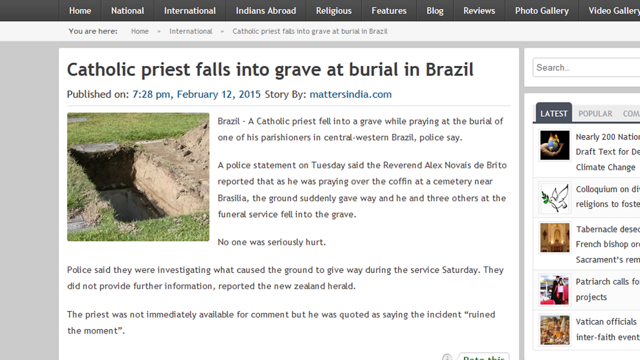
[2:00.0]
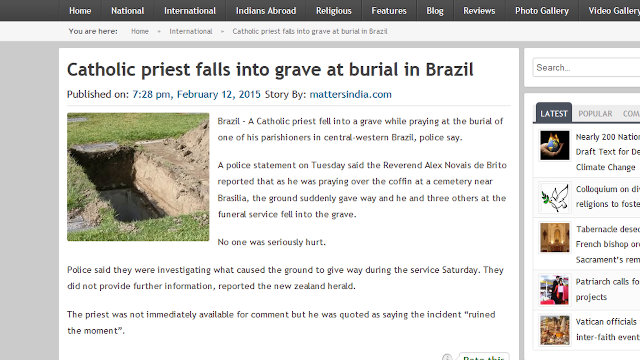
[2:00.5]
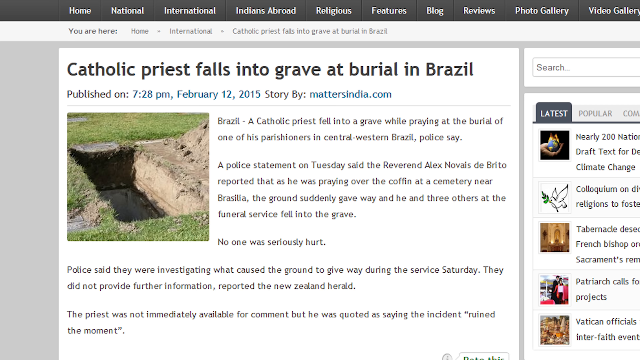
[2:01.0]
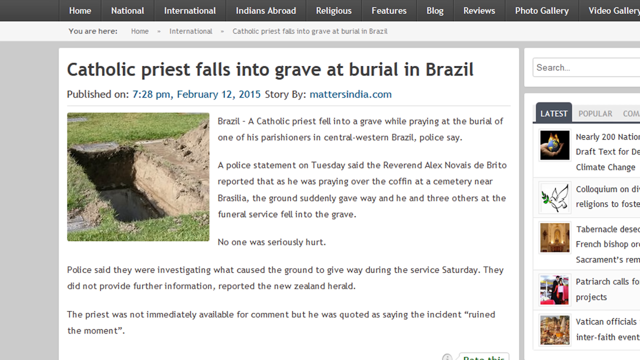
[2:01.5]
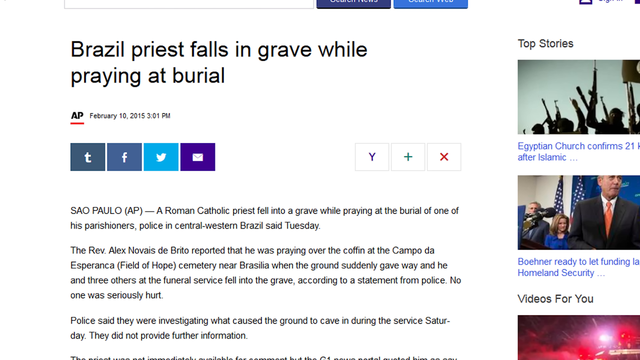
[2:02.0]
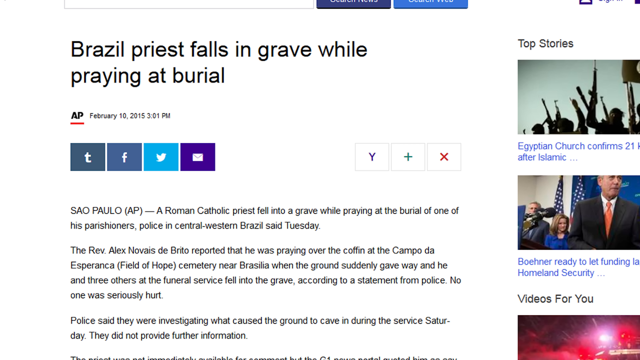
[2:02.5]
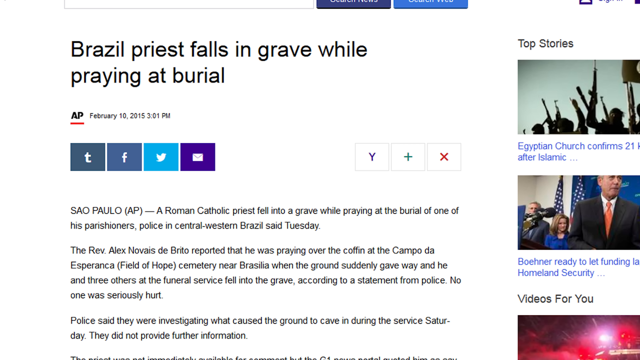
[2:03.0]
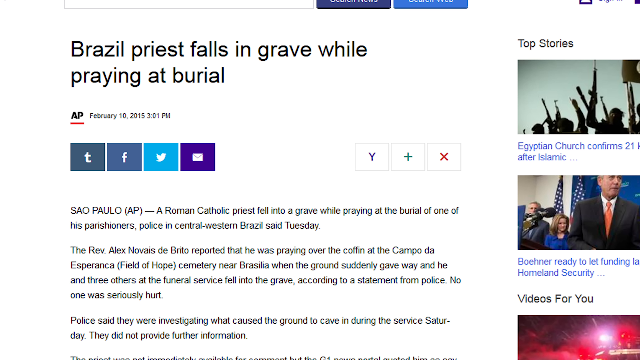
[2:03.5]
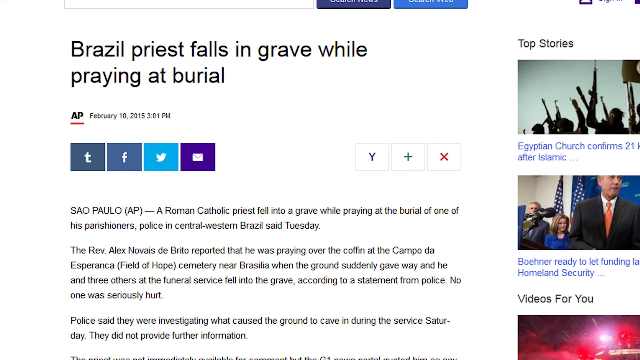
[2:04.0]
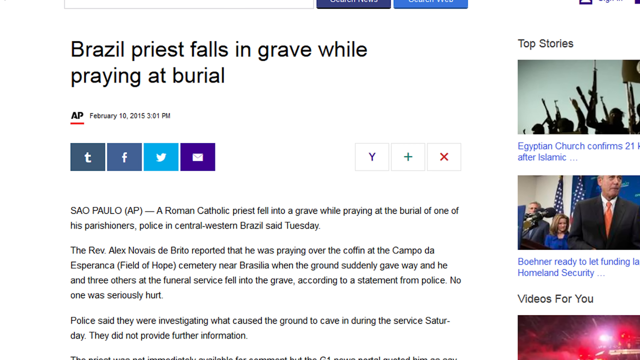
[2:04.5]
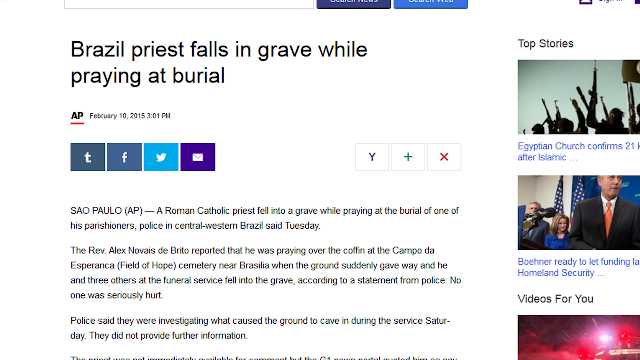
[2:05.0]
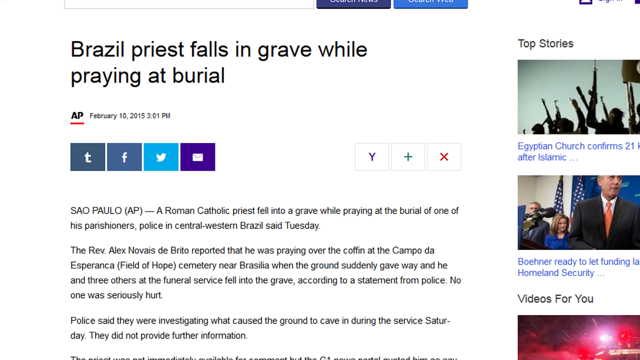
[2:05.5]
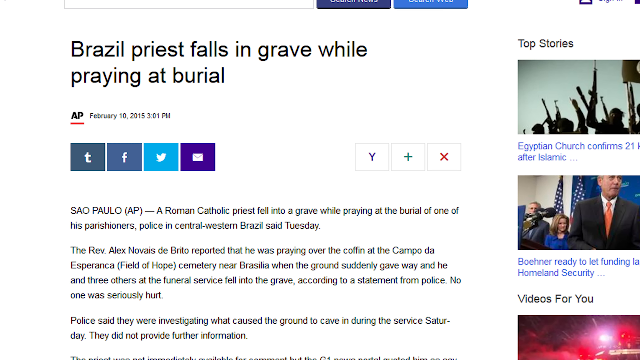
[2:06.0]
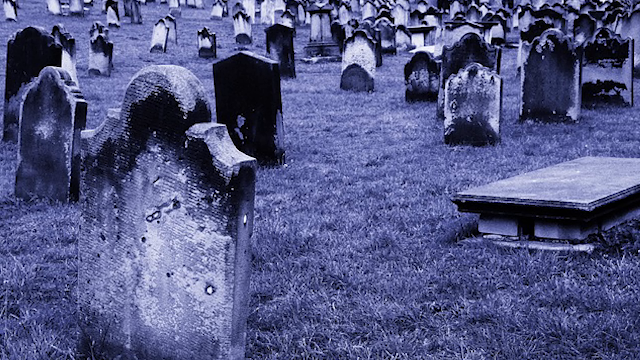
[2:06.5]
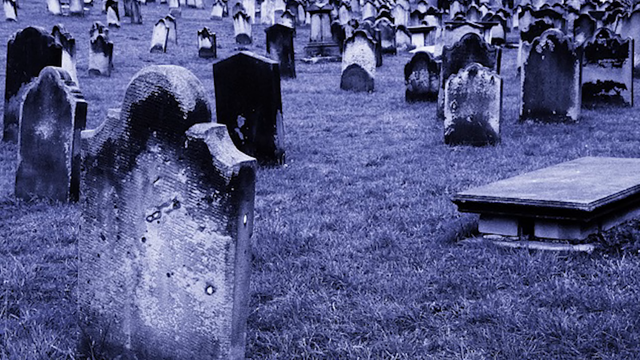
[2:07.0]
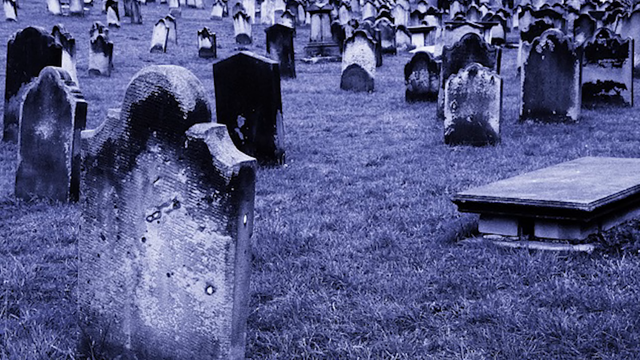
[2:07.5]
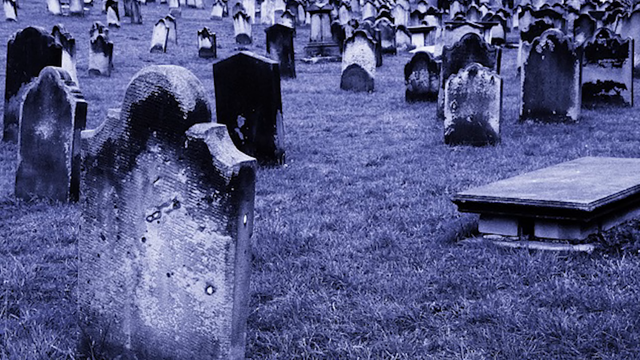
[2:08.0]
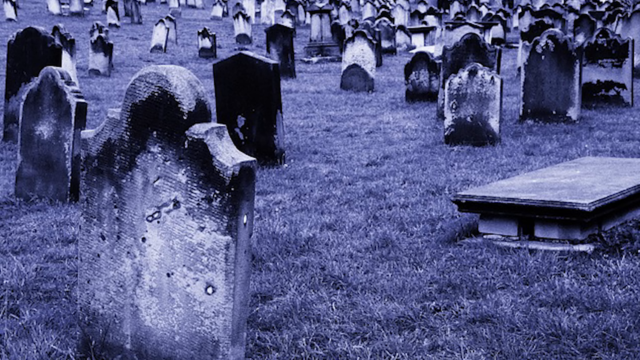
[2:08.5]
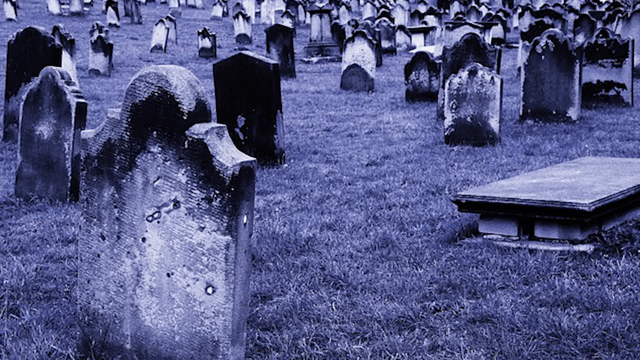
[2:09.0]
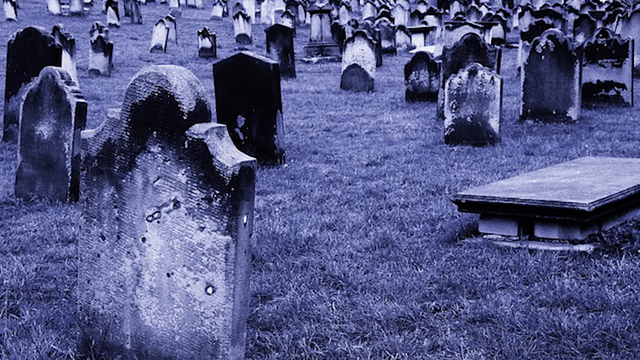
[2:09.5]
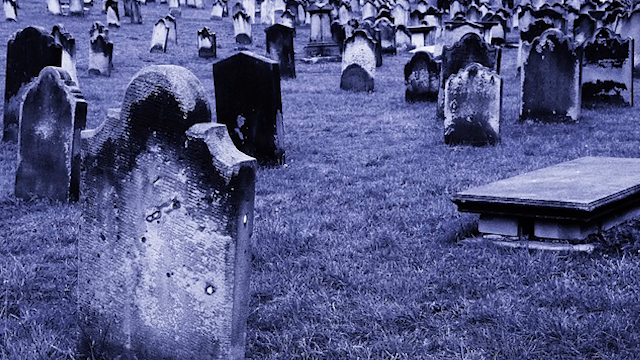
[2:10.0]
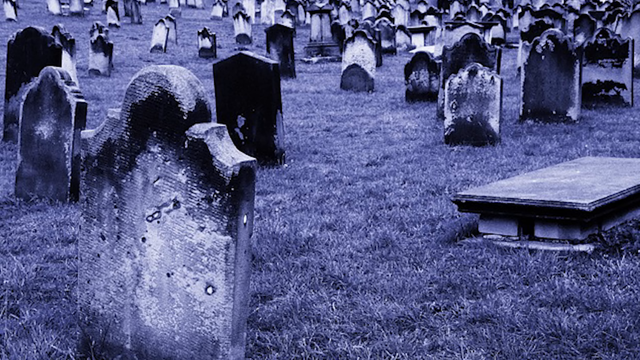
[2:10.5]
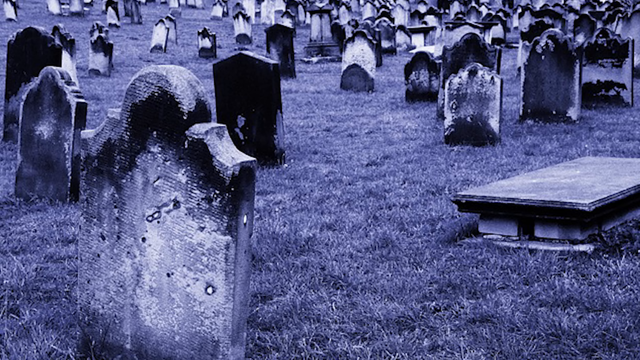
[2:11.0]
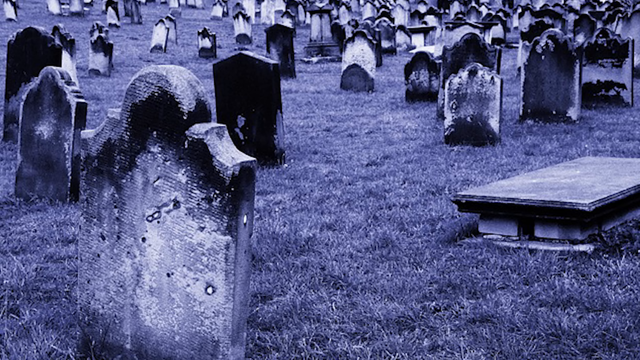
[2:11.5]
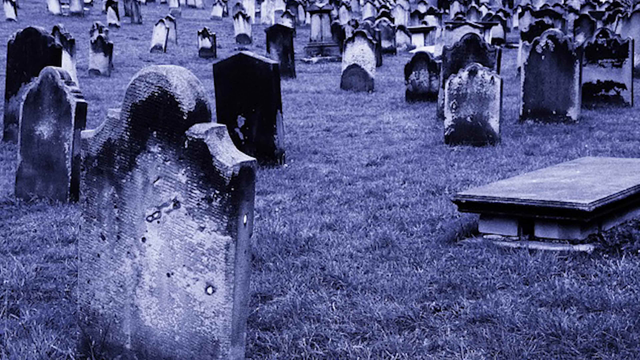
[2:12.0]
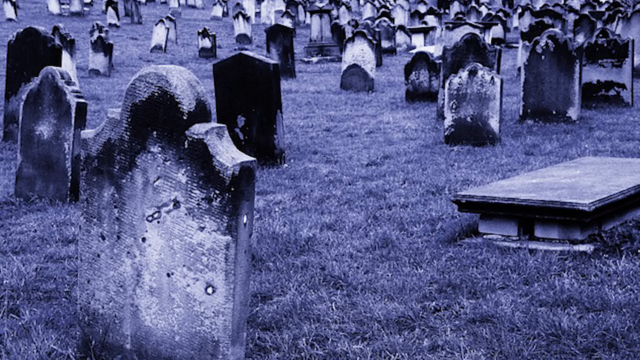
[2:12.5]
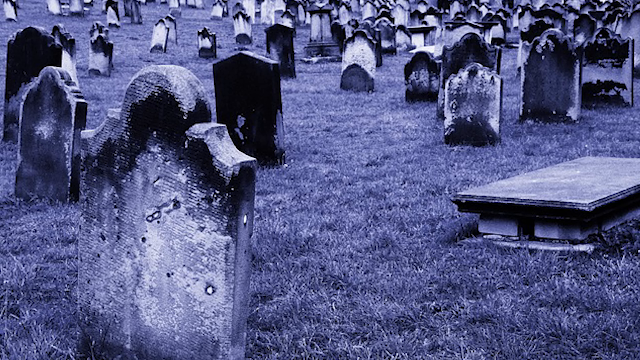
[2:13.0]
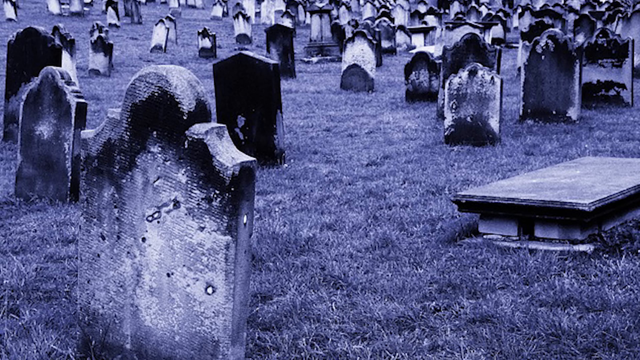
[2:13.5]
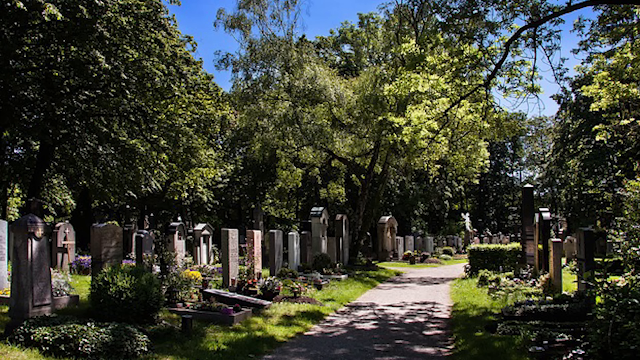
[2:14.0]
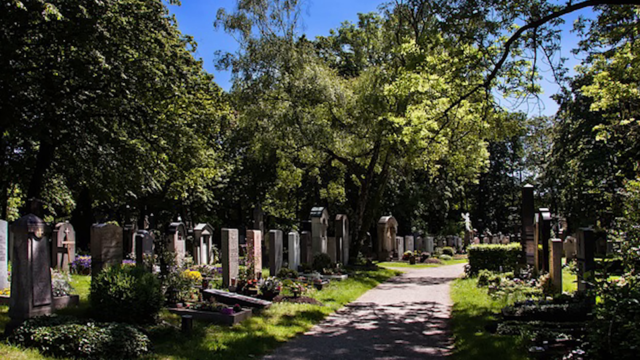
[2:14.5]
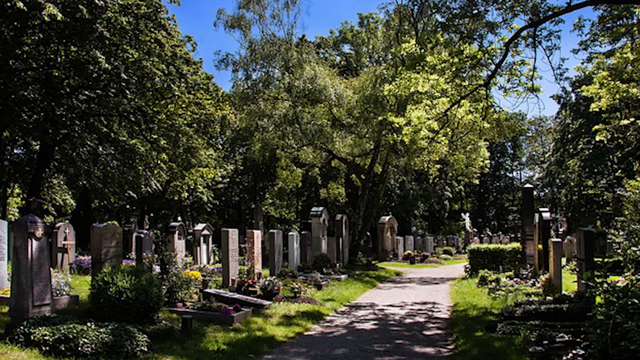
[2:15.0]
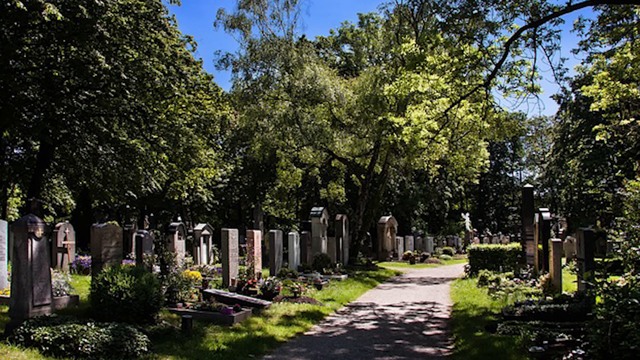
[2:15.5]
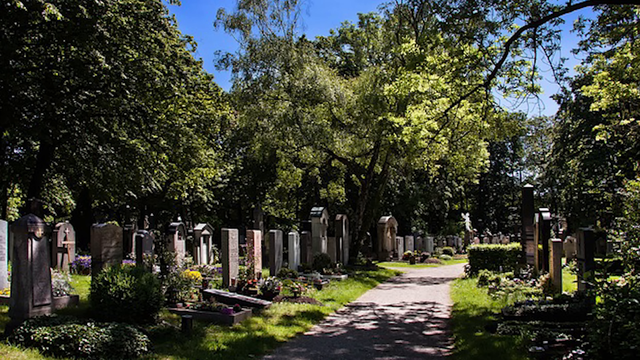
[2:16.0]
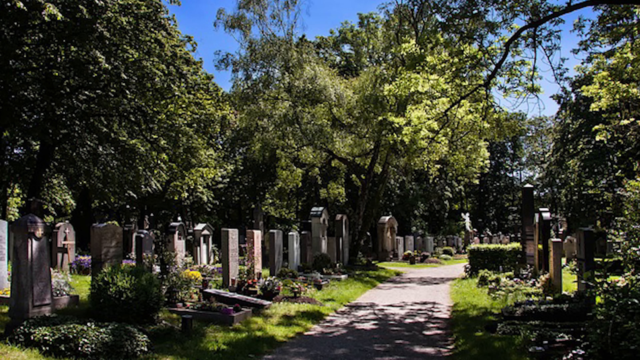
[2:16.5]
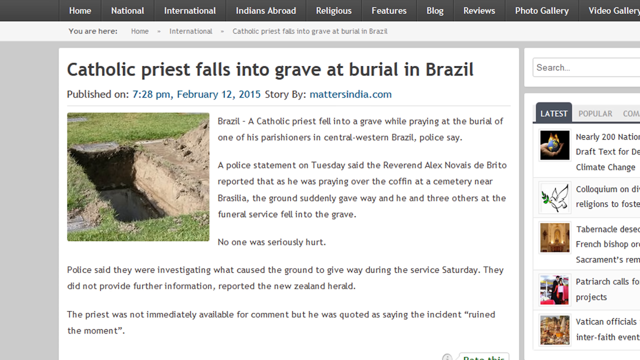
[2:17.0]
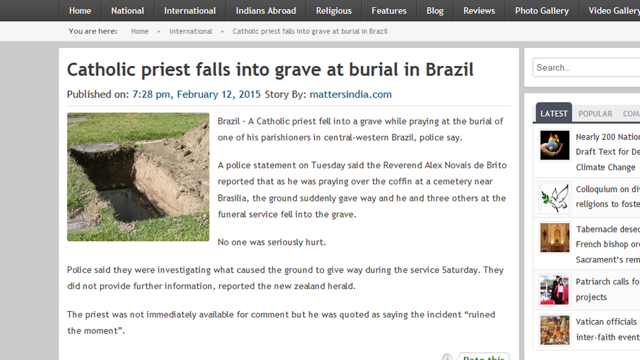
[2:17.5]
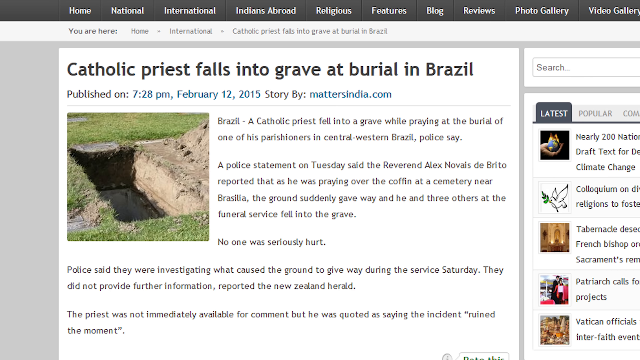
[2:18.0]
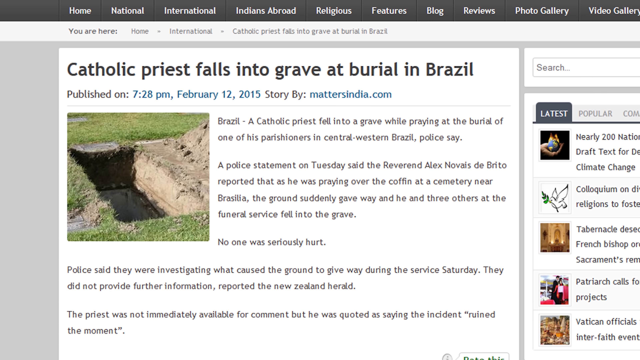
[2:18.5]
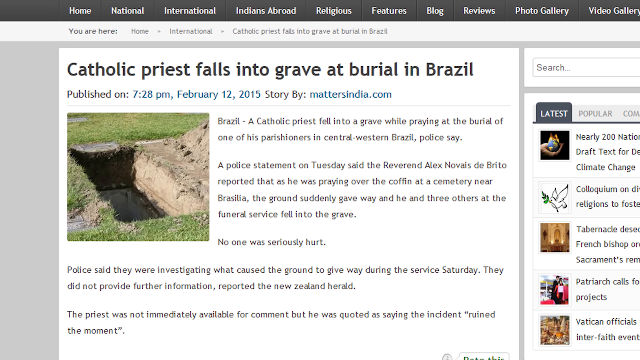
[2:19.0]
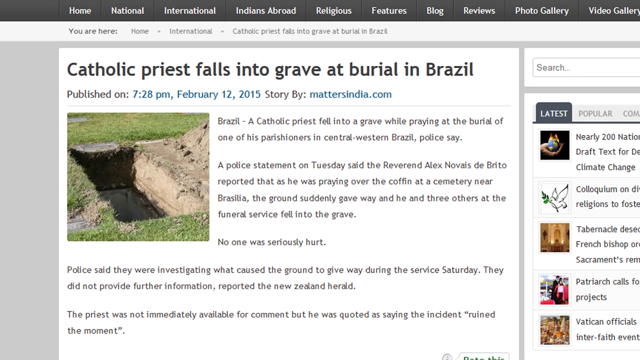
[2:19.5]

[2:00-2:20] A website page shows, at the very top in black, "Catholic priest falls into grave at burial in Brazil". Underneath is a small square picture of a big grave site, showing the hole, the grass around it and a pile of dirt. It cuts to another webpage headed in black "Brazil priest falls in grave while praying at burial", with the text "Sao Paulo, a Roman Catholic priest fell into a grave while praying at the burial of one of his parishioners, police in central western Brazil said Tuesday." underneath. A black and white picture of a graveyard follows, showing a large number of old headstones that are black and not well kept. Some are totally black, others show white and gray, but they are largely torn to pieces, and the grass around them is dark gray and looks like it would be dead if it were in color.